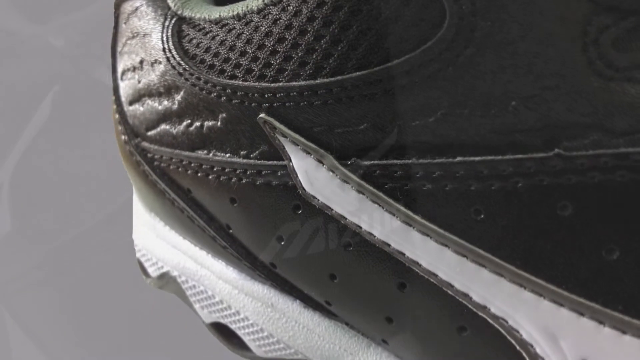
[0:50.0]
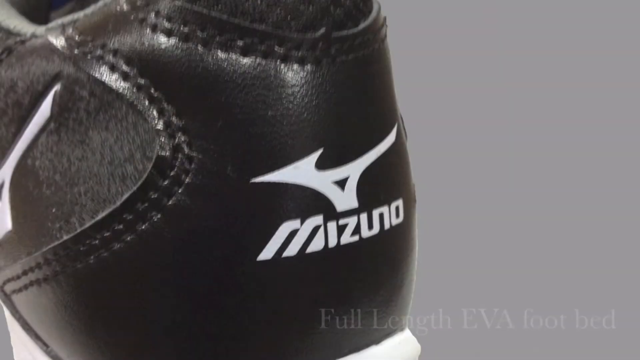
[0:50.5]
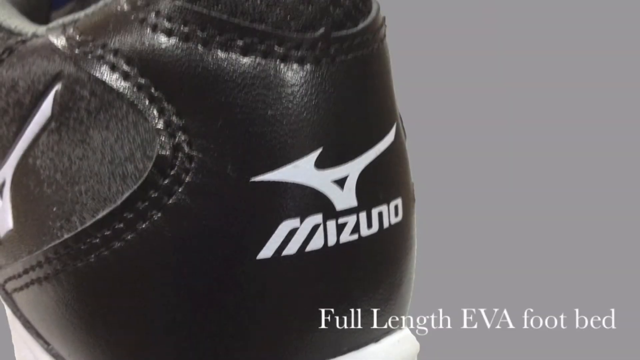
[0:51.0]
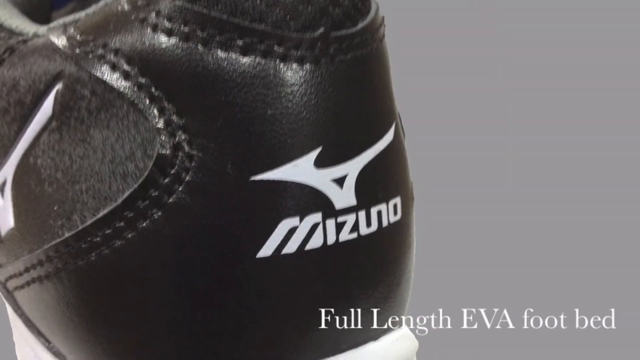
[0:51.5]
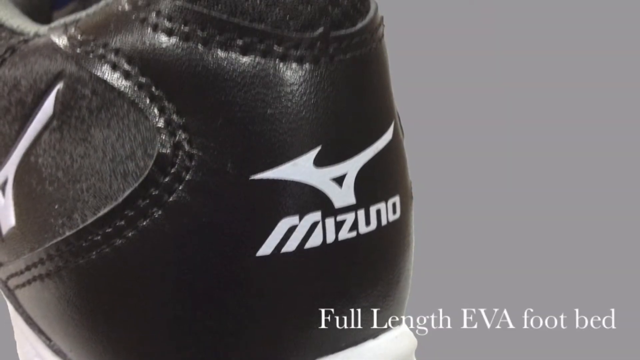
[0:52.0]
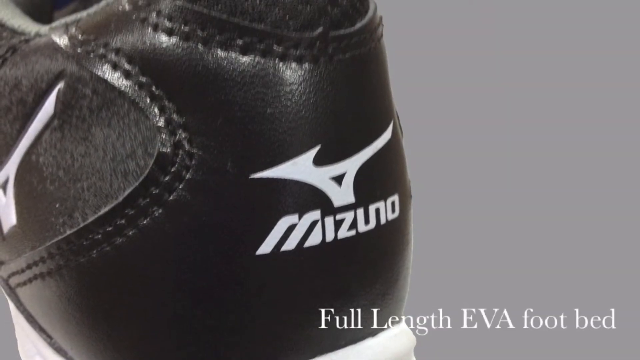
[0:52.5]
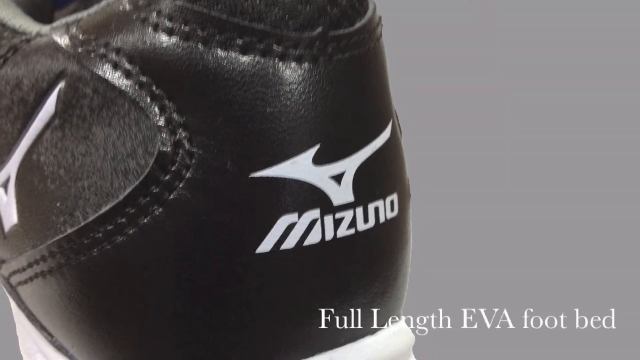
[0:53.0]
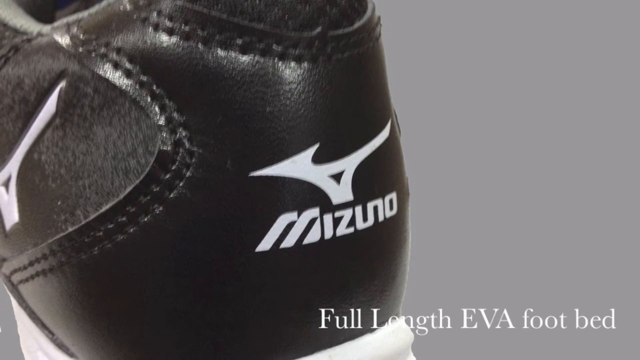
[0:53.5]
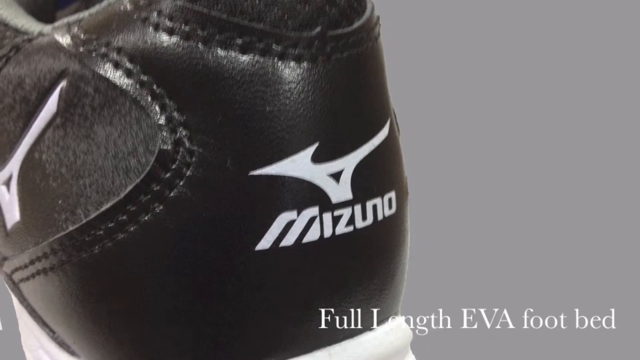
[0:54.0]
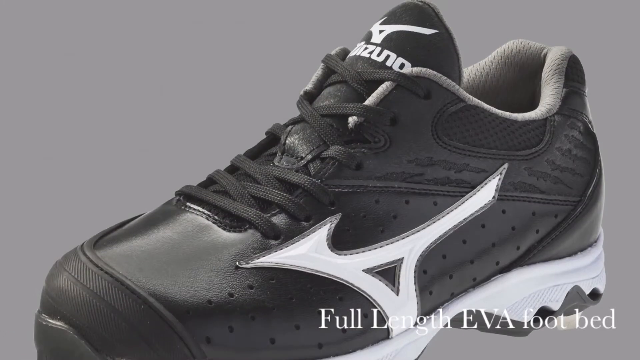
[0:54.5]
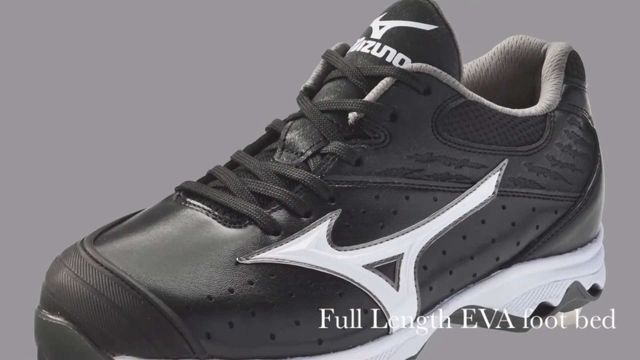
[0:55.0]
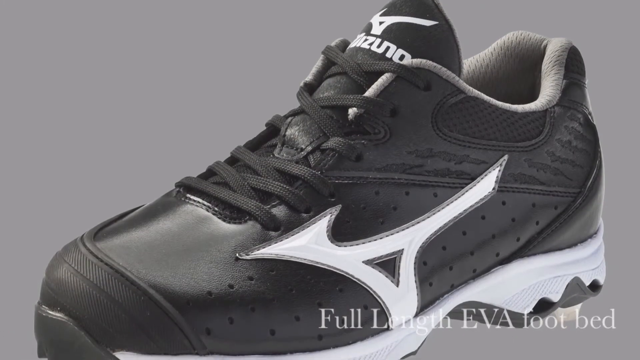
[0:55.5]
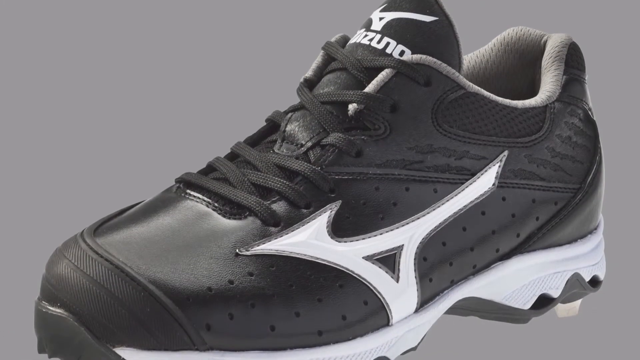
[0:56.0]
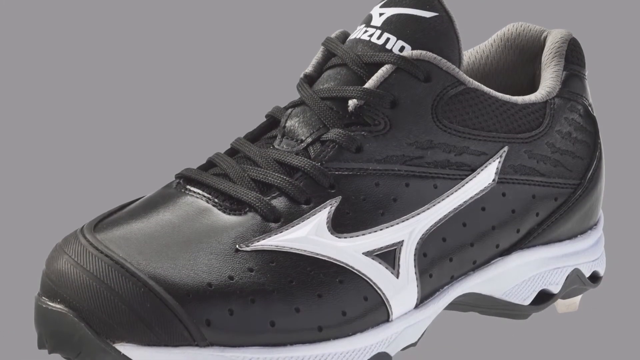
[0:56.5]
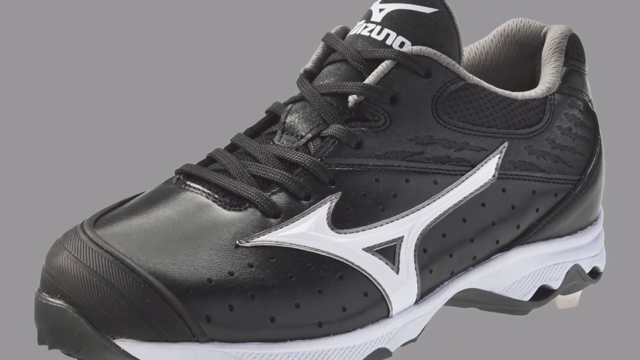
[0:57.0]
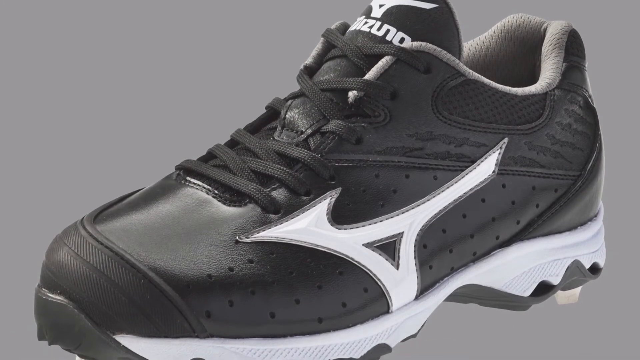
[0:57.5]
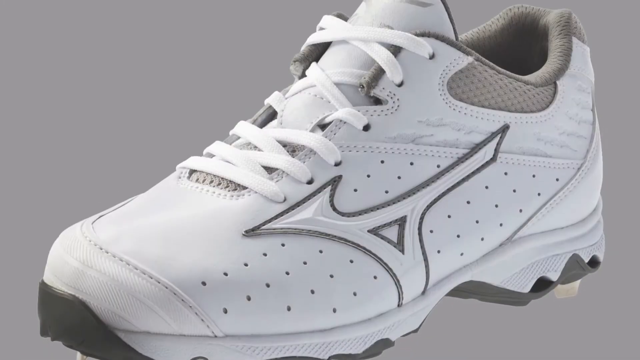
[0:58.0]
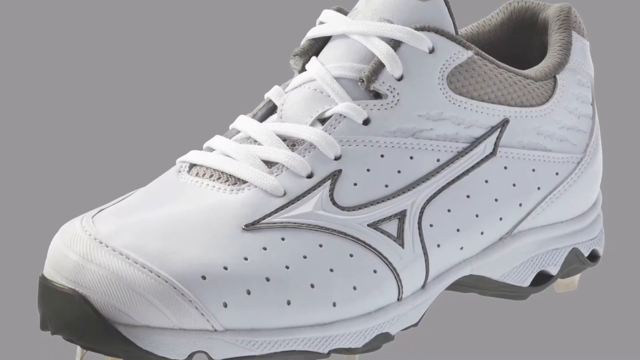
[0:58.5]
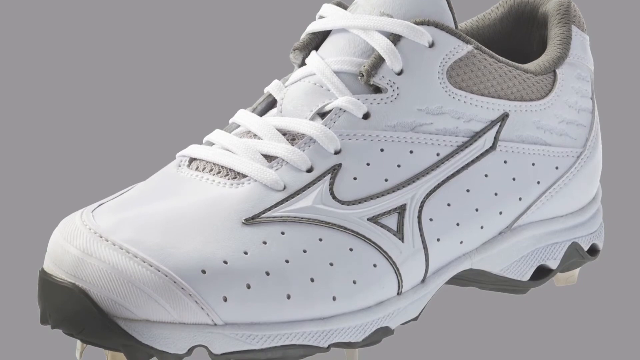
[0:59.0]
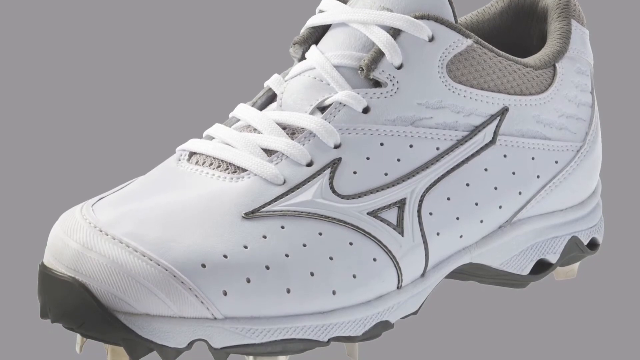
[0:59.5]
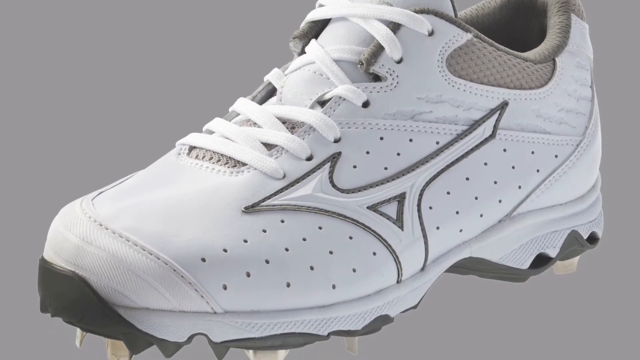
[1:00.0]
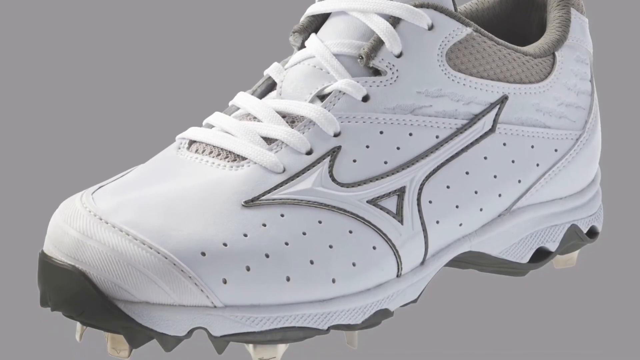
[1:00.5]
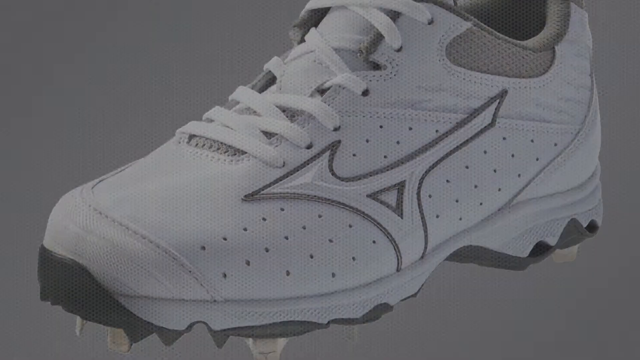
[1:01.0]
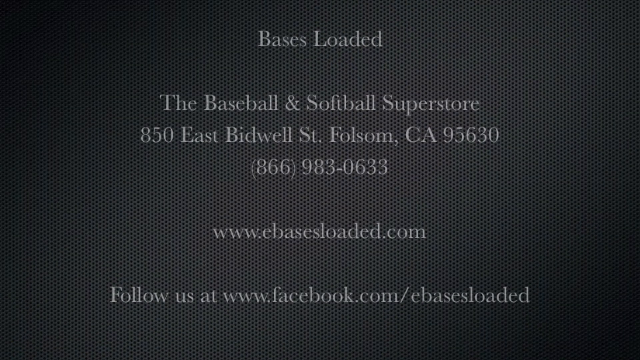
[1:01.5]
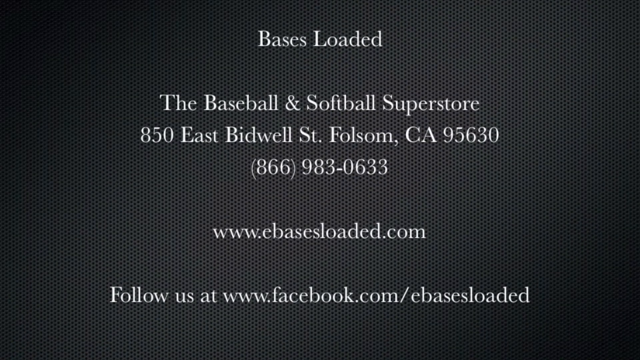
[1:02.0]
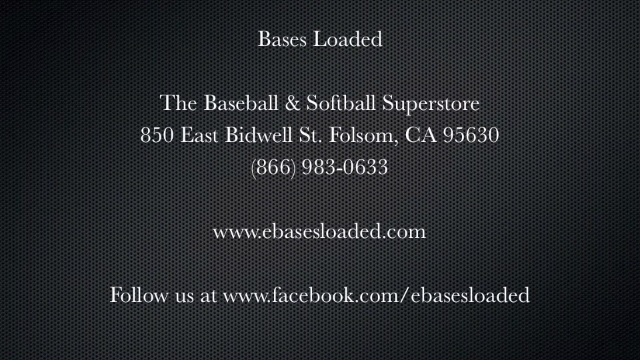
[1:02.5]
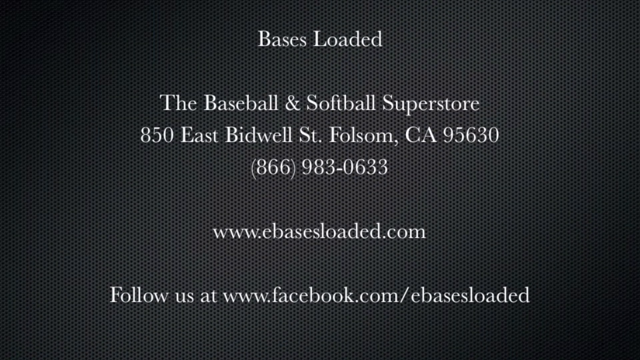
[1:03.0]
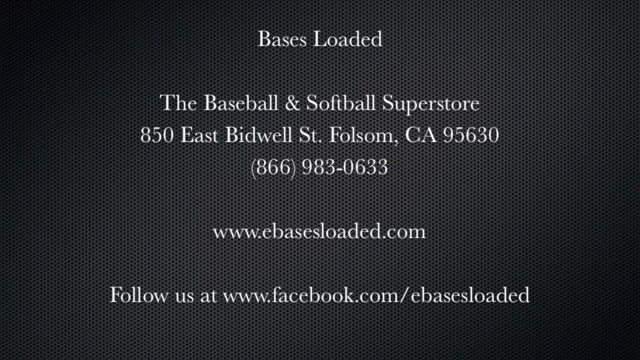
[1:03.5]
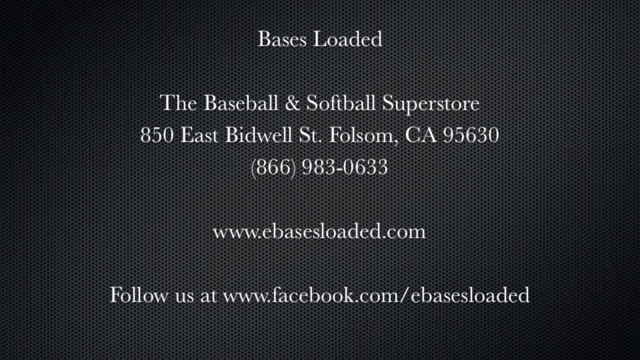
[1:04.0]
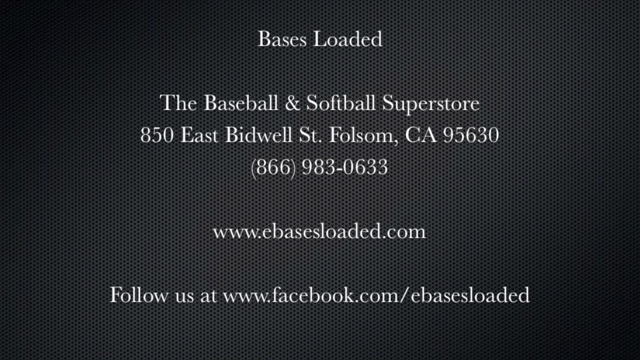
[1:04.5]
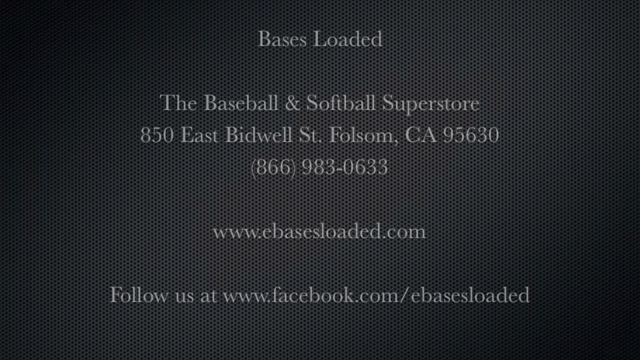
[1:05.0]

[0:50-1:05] The commercial shows the cleat in black and white again, with text saying it has a "full length EVA footboard". After the cleat is shown in both black and white, an info screen for Bases Loaded appears, giving its location at 850 East Bidwell Street, Folsom, California, an 866 phone number, a website, and "facebook.com/eBasesLoaded" to follow them.